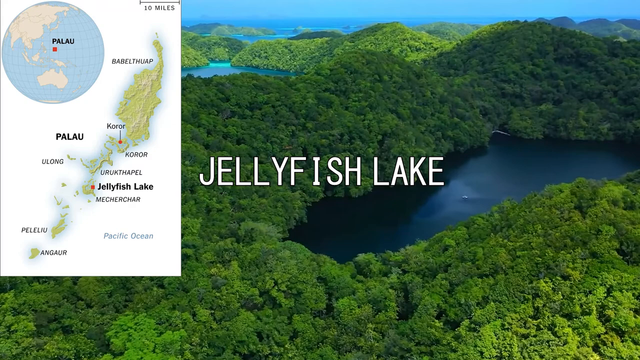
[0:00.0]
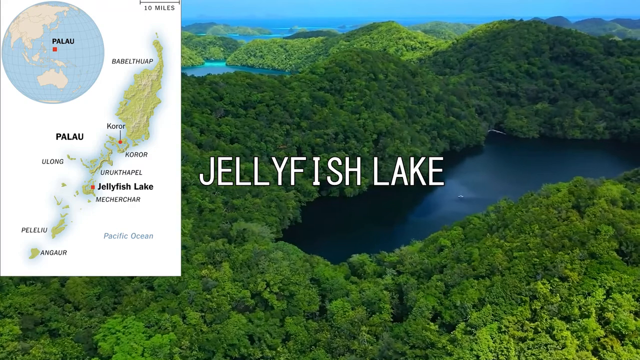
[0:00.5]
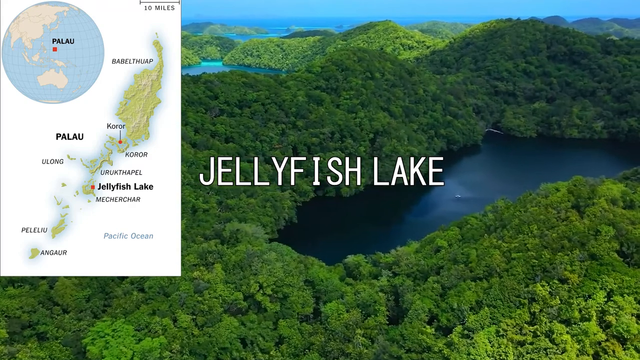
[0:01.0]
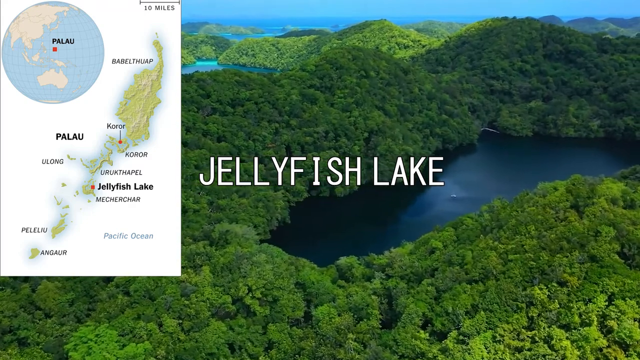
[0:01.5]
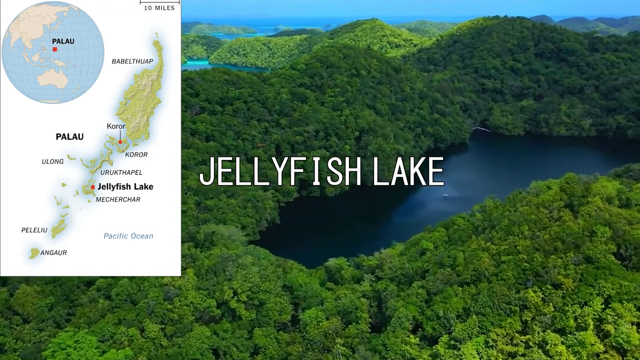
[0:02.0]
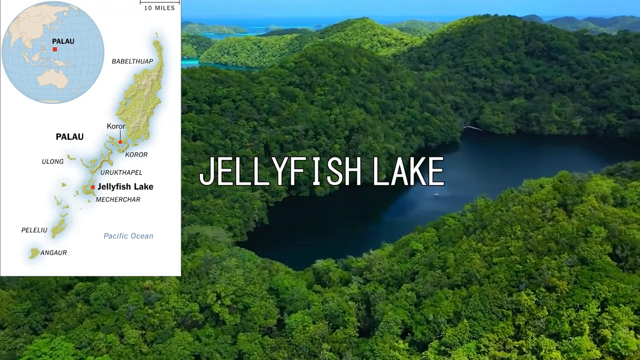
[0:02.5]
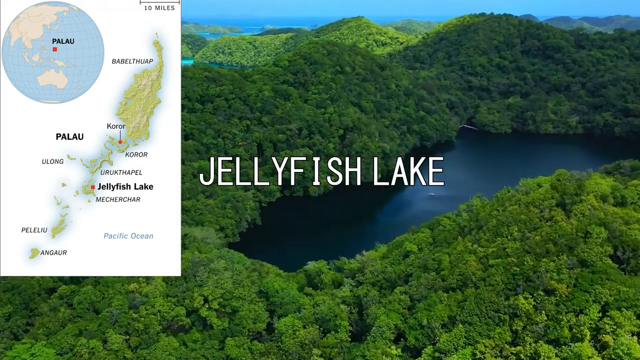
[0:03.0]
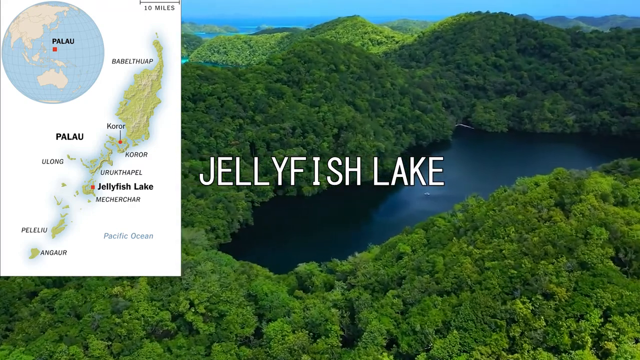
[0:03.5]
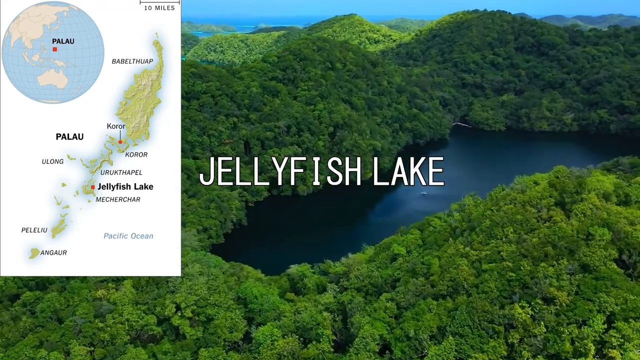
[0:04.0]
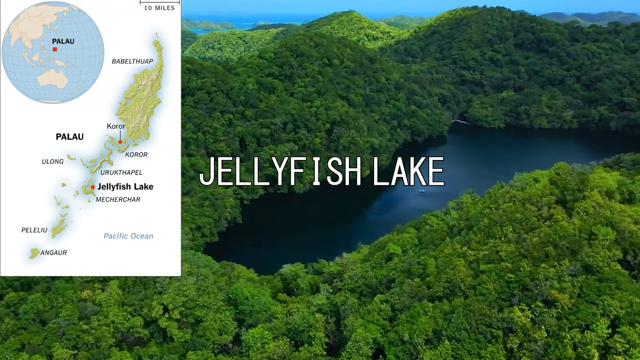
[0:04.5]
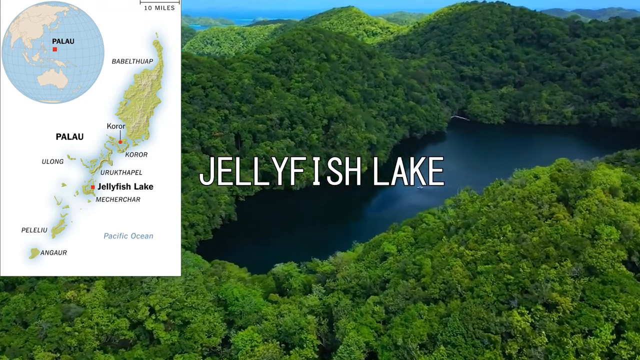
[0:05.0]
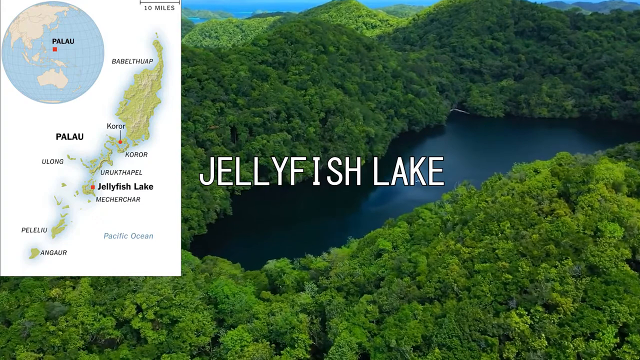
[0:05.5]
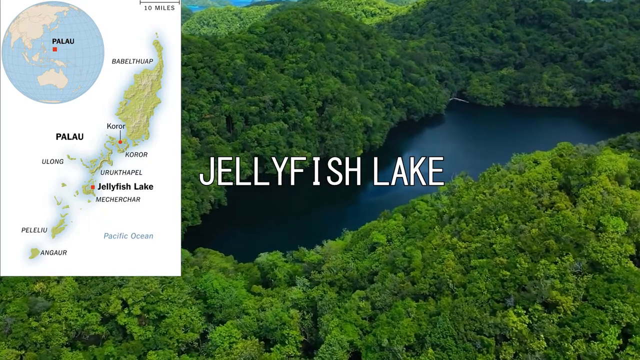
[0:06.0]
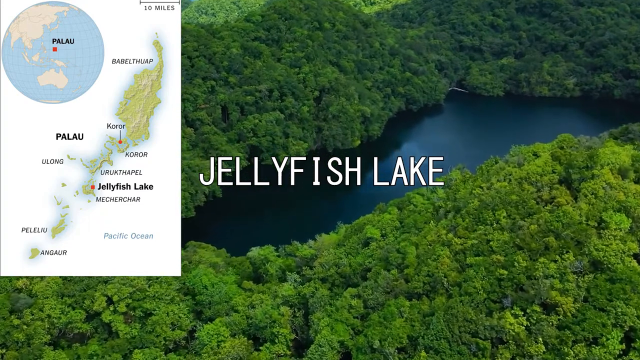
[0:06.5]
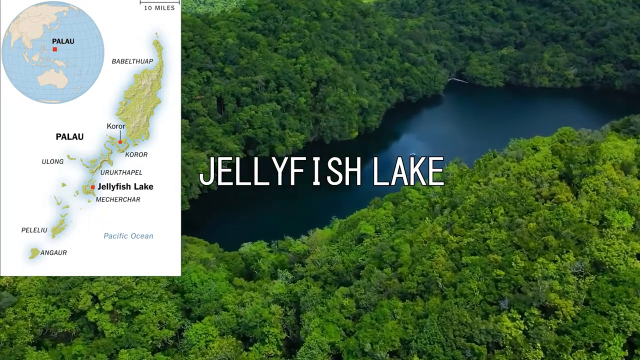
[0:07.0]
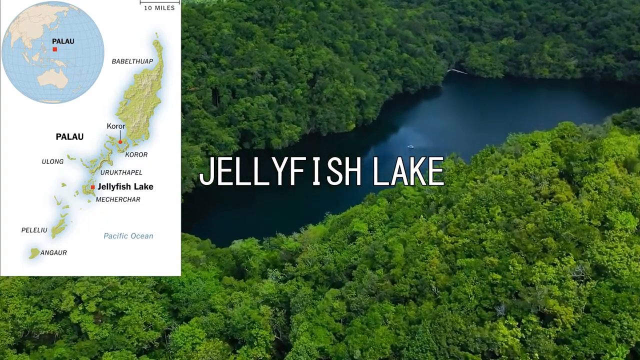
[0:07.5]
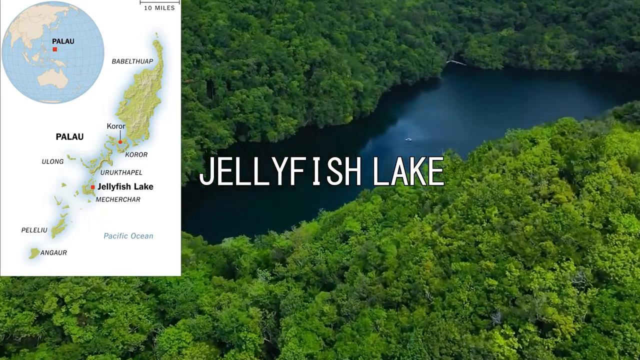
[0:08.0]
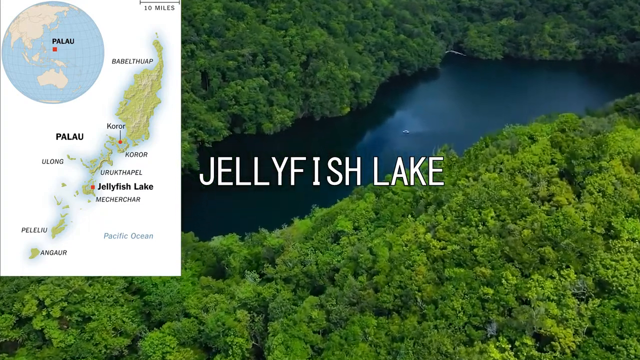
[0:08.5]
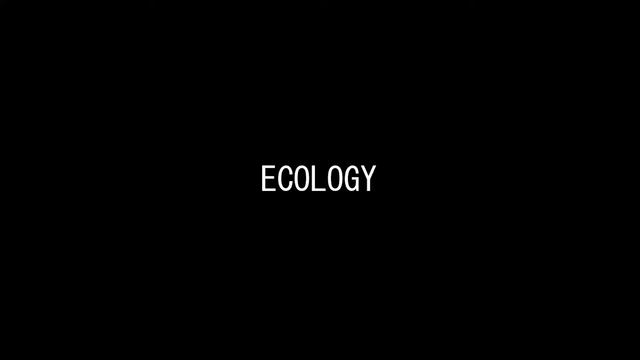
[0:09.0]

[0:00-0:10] What looks like a picture of Jellyfish Lake appears, seemingly filmed from a drone coming down over the top of it, and then the words "ecology" and "Jellyfish Lake" pop up. An inlay on the side shows that the lake is in Palau, in the middle of the Pacific Ocean, apparently between Southeast Asia and Papua New Guinea or Australia.